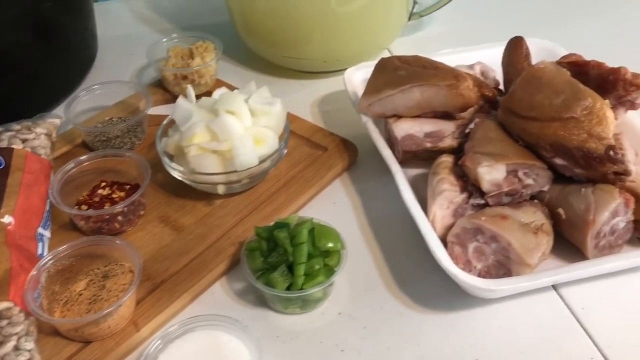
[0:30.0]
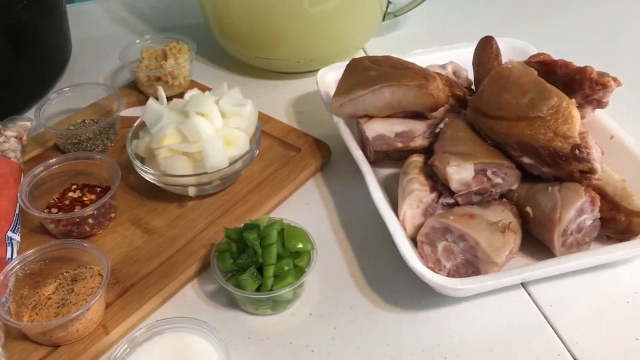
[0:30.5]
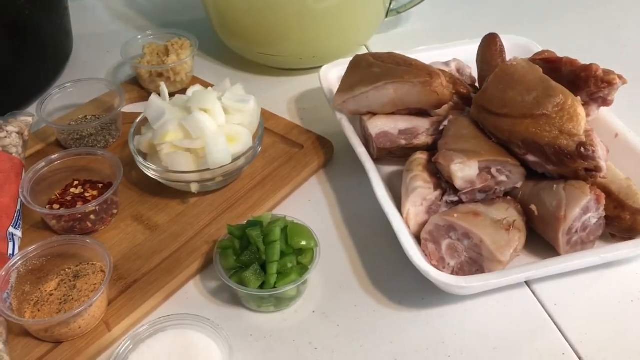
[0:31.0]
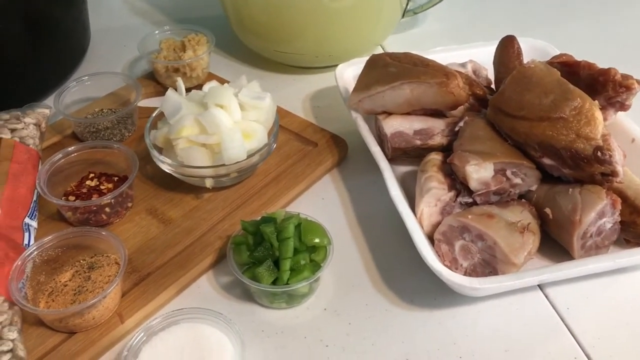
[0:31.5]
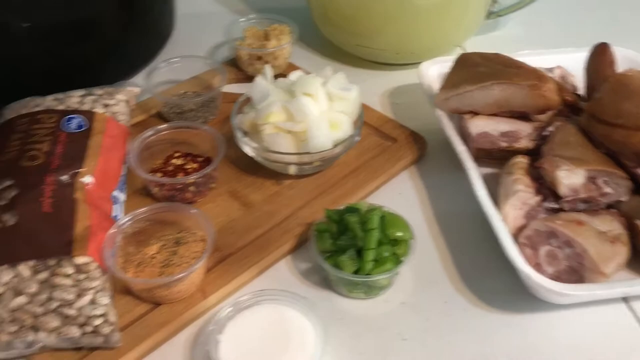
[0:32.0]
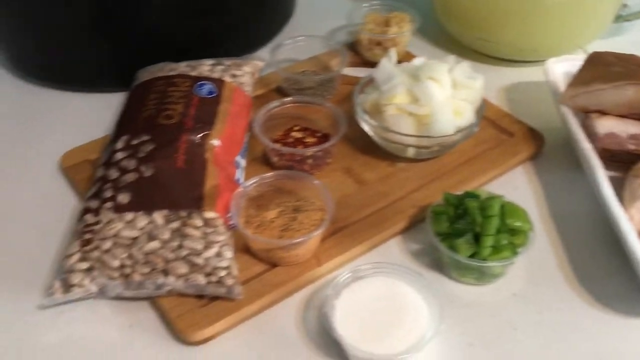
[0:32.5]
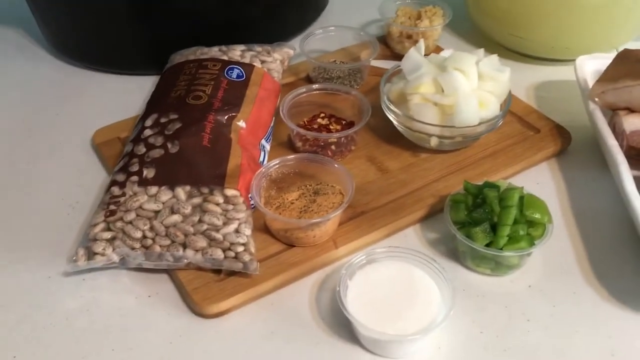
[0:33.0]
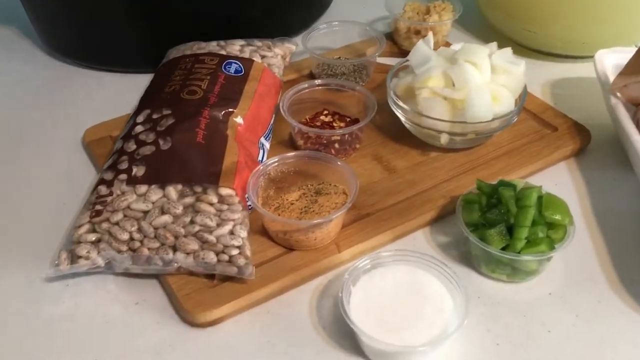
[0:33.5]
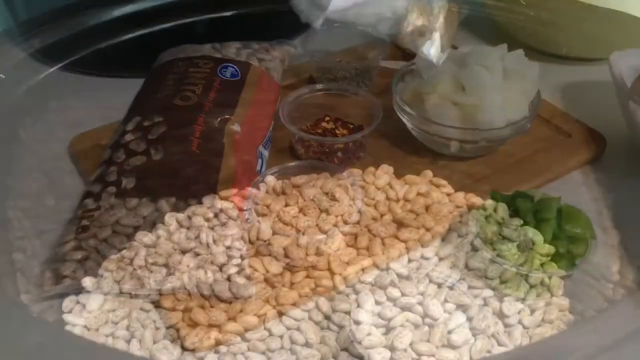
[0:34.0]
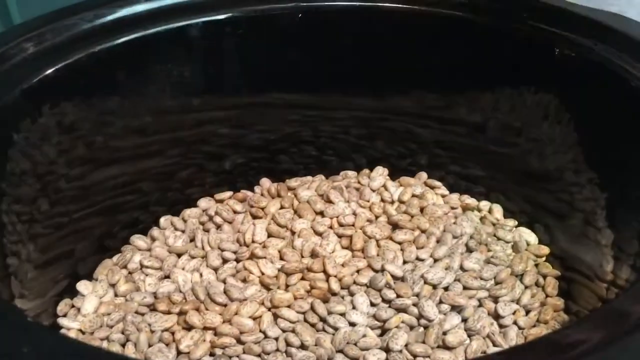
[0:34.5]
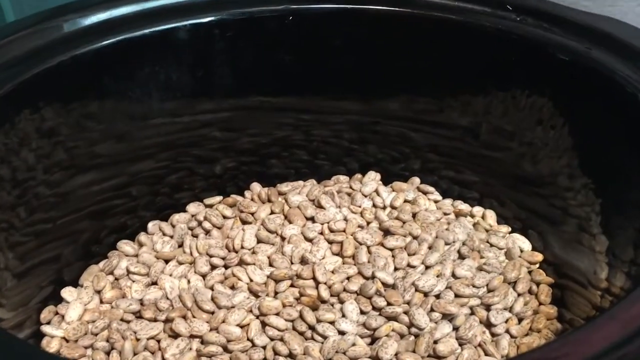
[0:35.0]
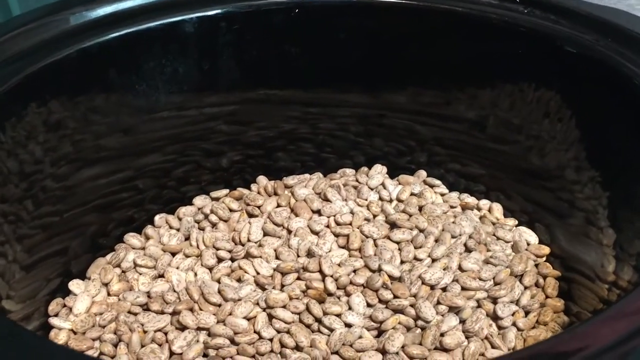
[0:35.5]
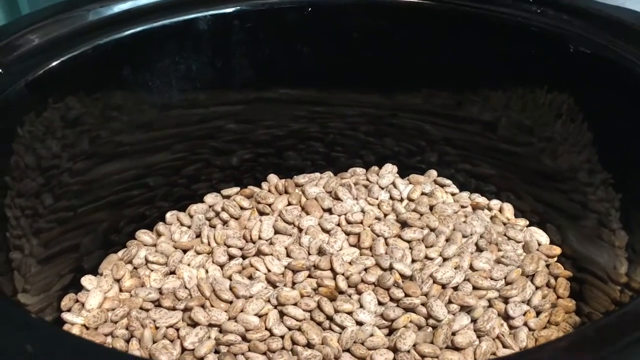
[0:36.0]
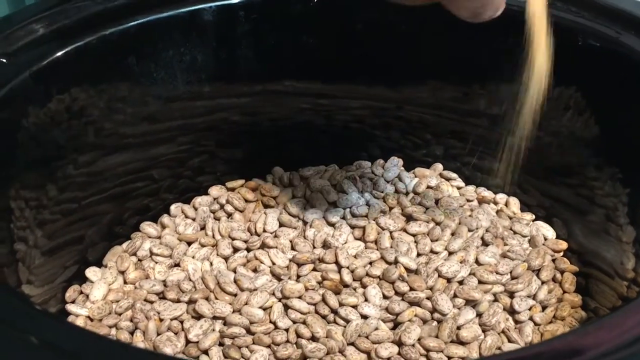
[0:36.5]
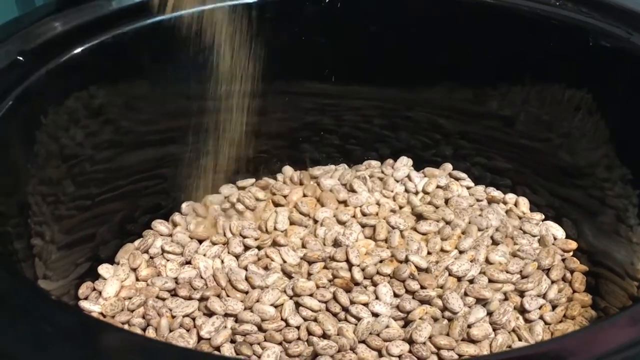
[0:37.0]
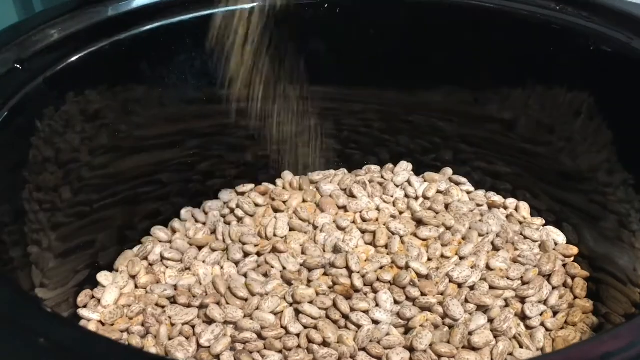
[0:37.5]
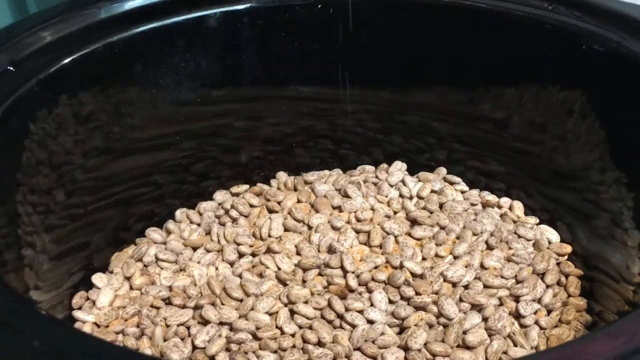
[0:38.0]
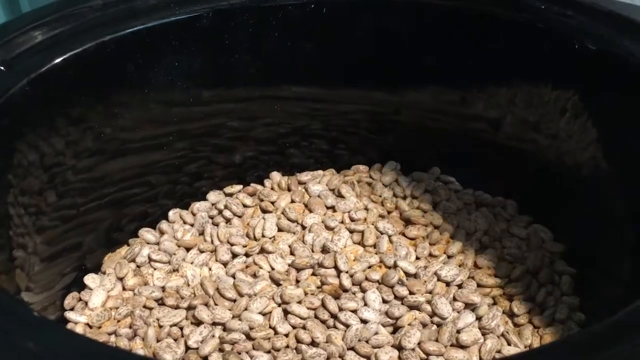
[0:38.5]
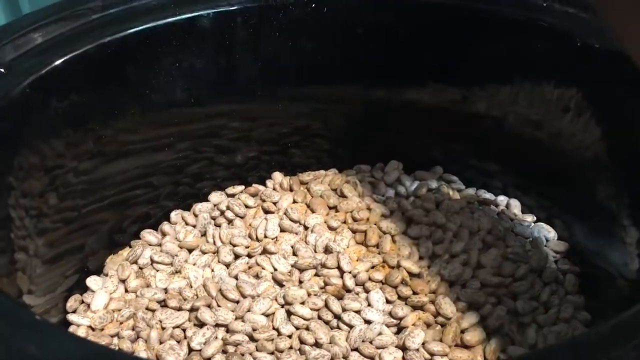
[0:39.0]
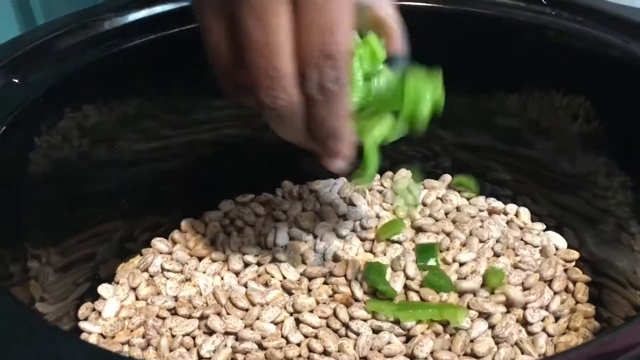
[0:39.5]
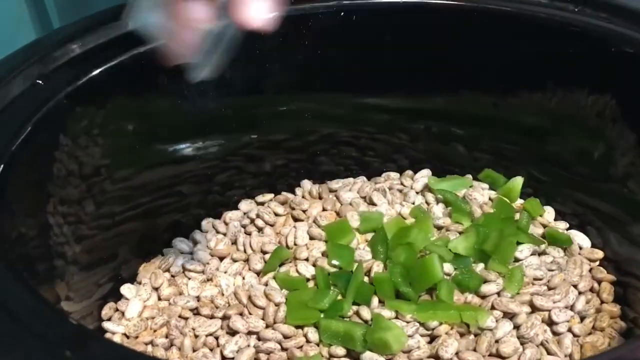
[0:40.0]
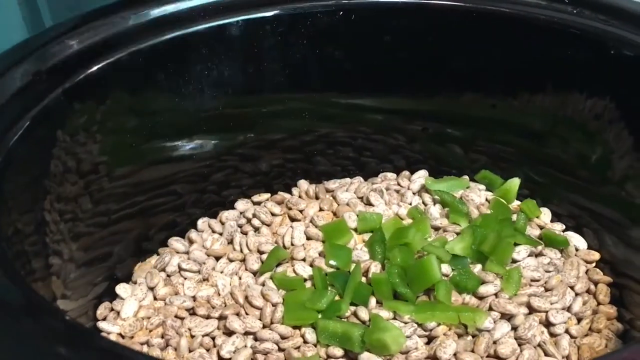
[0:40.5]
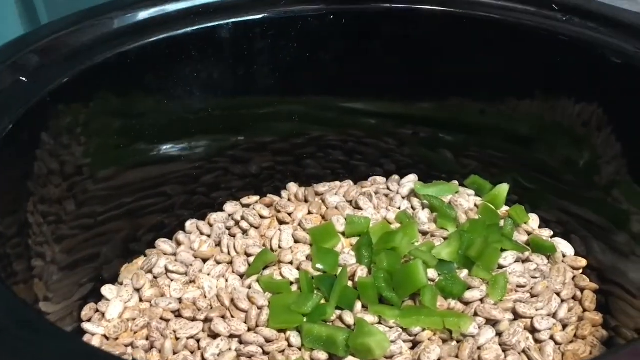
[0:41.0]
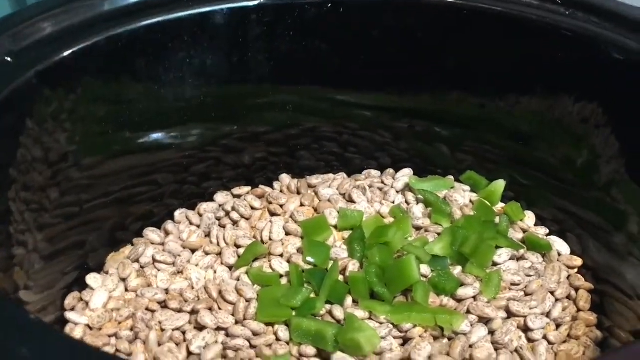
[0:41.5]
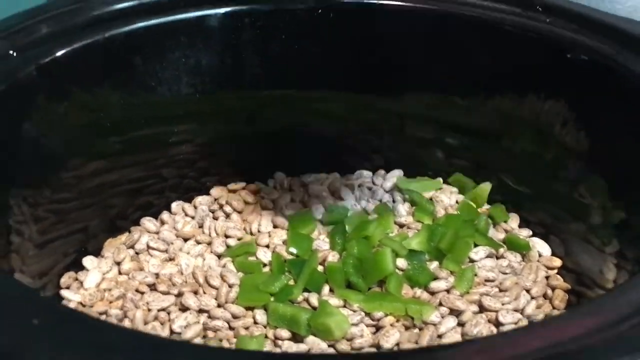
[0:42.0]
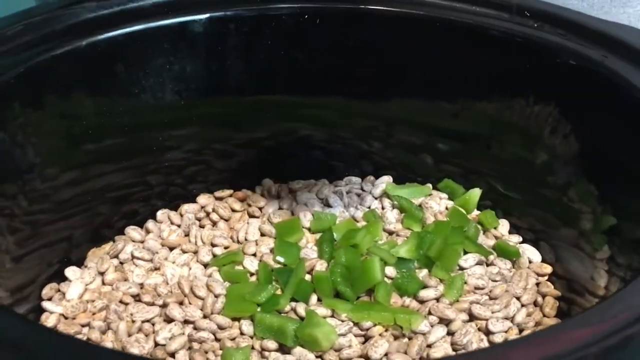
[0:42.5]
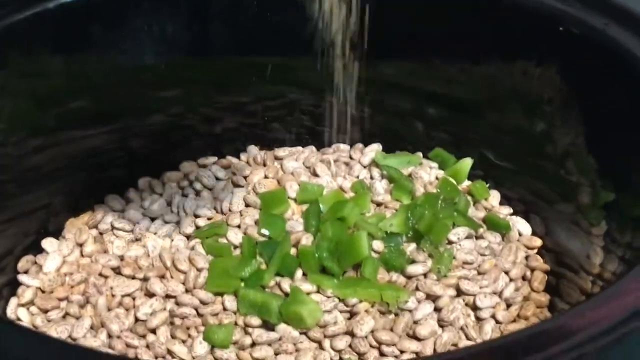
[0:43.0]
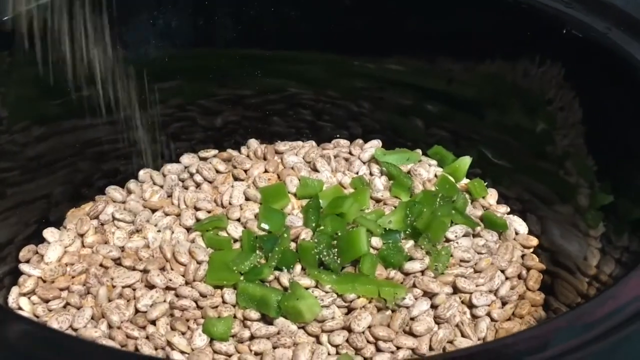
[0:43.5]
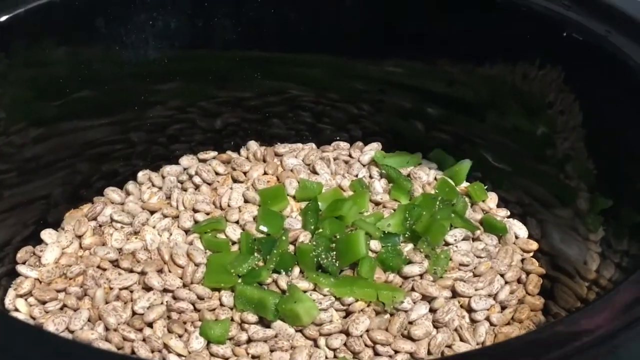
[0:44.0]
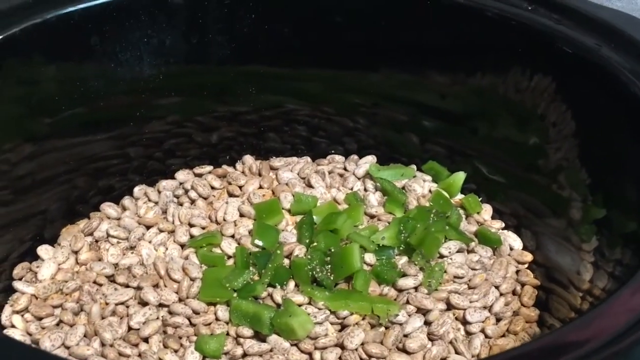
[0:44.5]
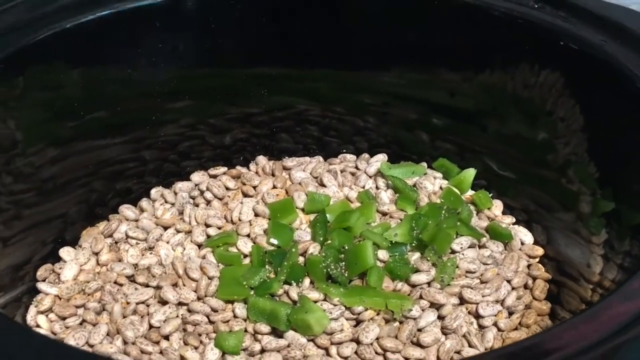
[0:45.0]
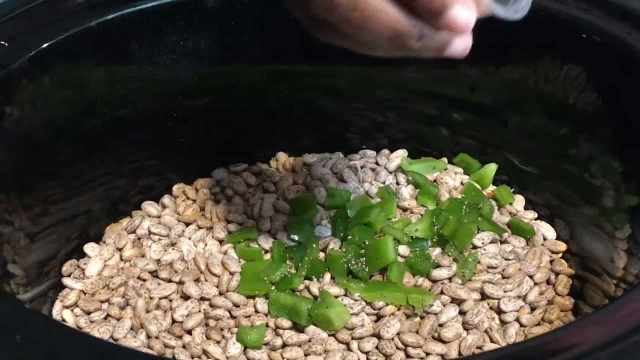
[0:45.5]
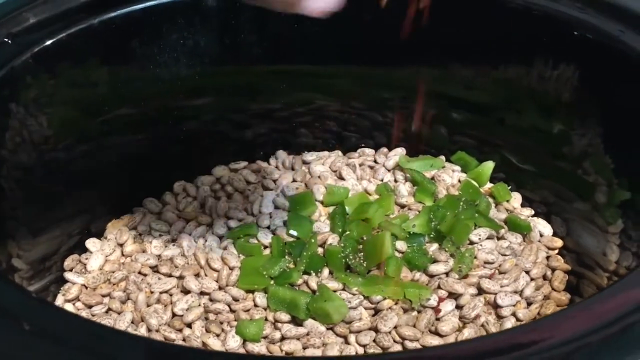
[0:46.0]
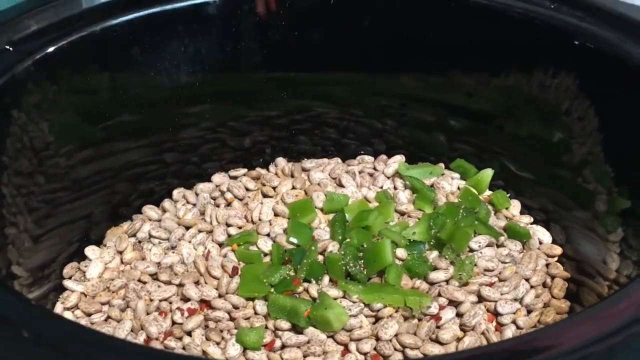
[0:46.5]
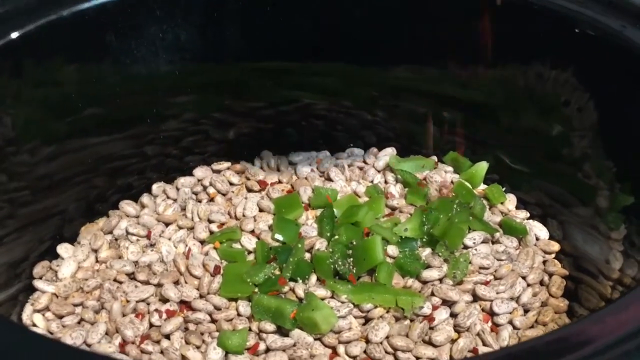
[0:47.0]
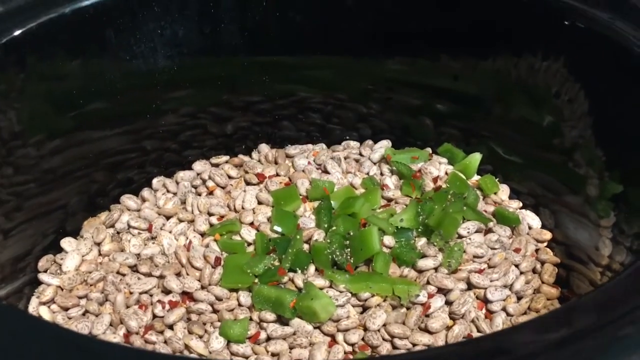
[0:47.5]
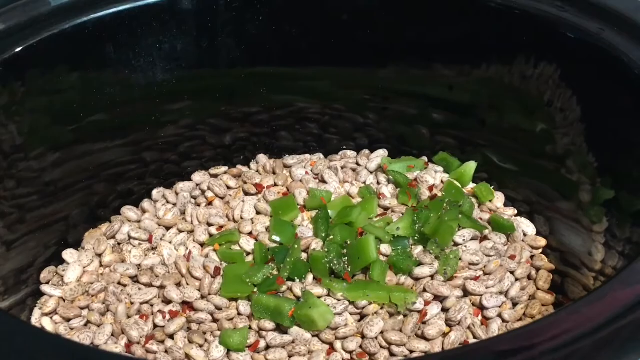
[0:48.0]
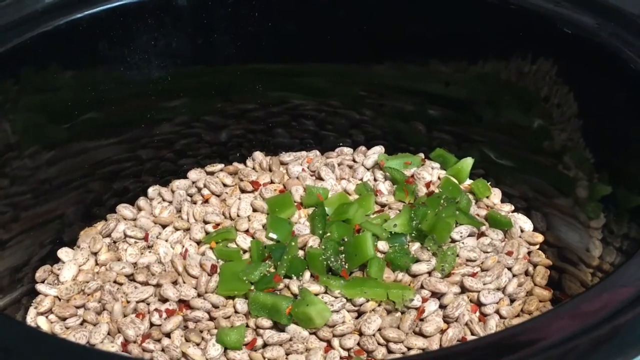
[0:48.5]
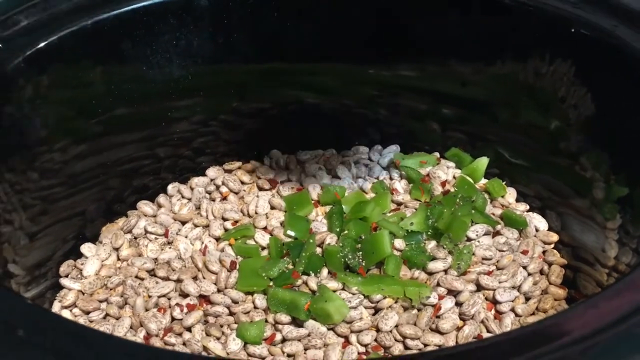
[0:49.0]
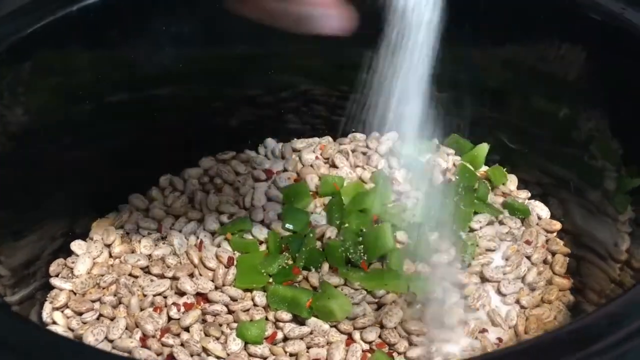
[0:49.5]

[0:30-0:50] A cup of juice and a jug of what looks like lemon juice are on the table, along with big chunks of meat in a tray. Ingredients are placed neatly on a wooden board. The beans are in a bowl, and green pepper, crayfish, black pepper and salt are added. Diced green pepper is transferred to a bowl, and cayenne pepper and crayfish are all in a transparent bowl on the kitchen cabinet. The meat is neatly arranged on a white plate, cut into big chunks.